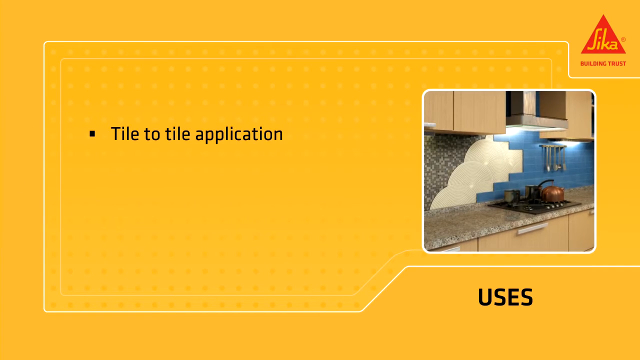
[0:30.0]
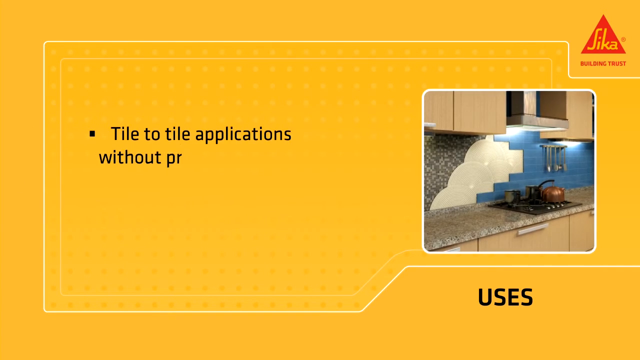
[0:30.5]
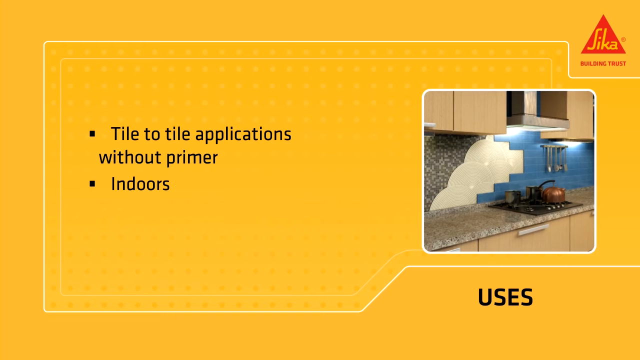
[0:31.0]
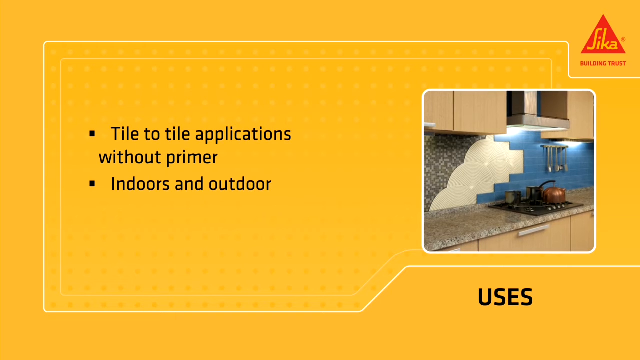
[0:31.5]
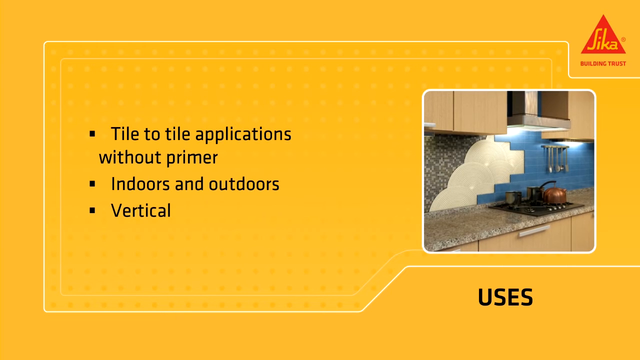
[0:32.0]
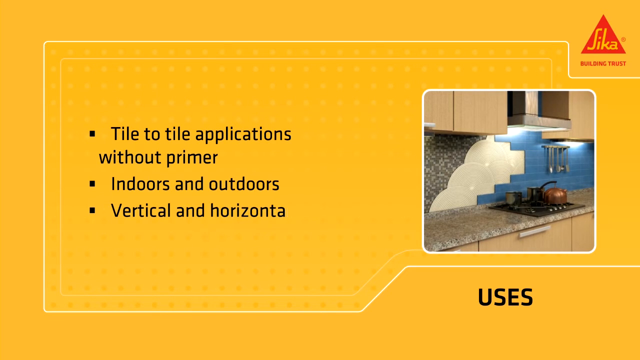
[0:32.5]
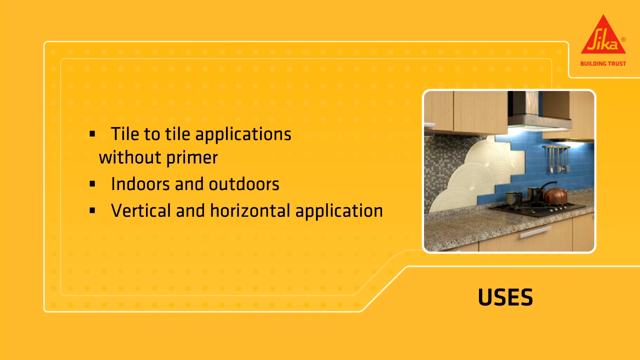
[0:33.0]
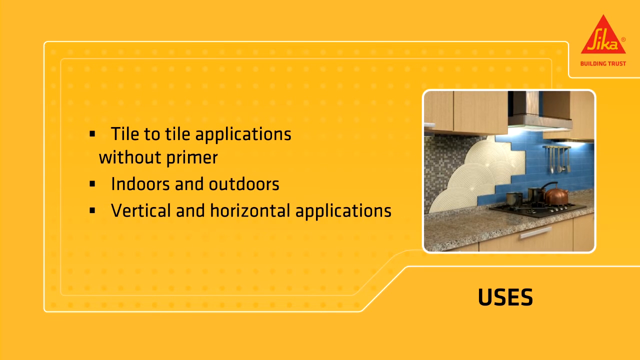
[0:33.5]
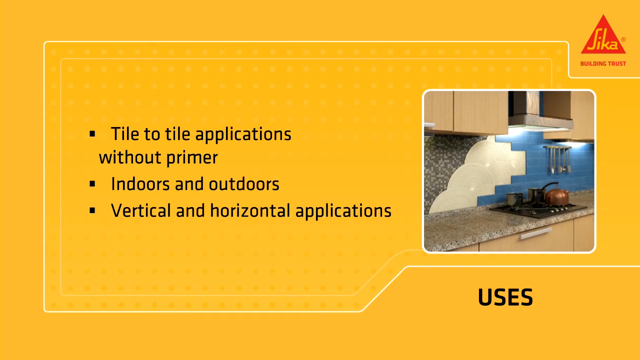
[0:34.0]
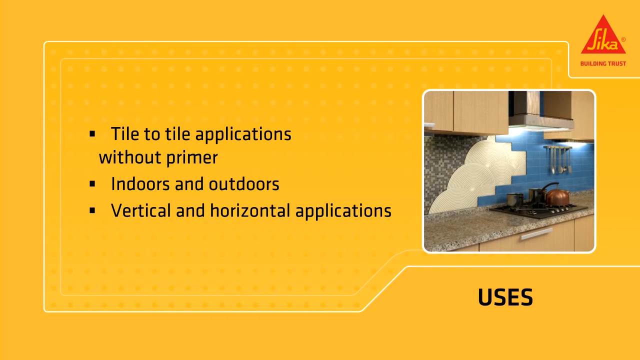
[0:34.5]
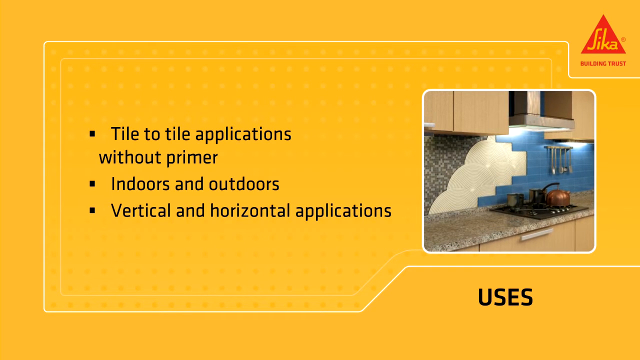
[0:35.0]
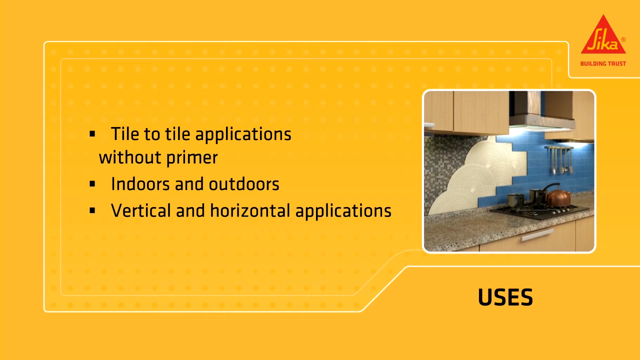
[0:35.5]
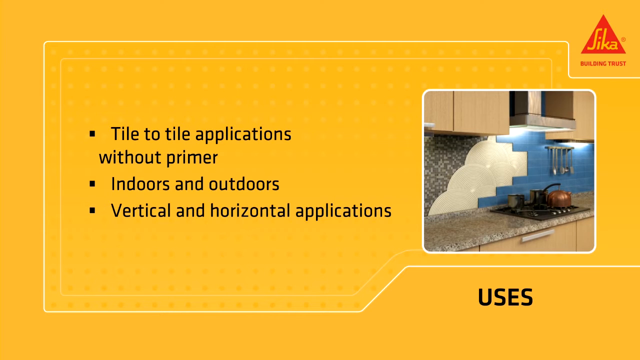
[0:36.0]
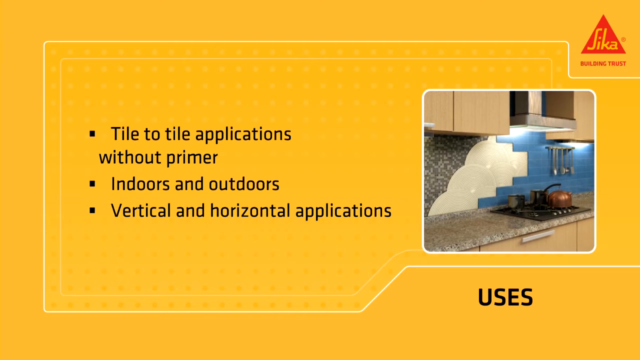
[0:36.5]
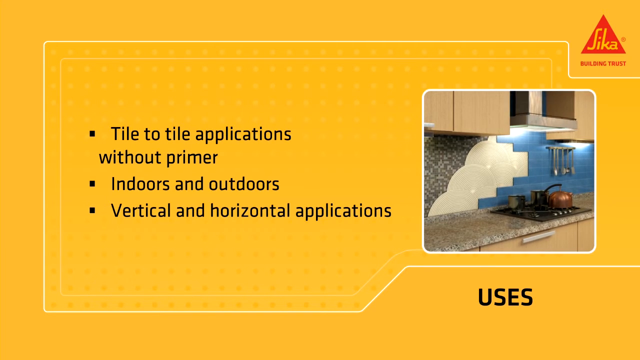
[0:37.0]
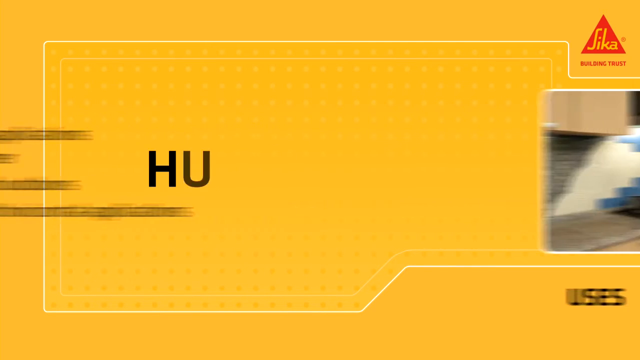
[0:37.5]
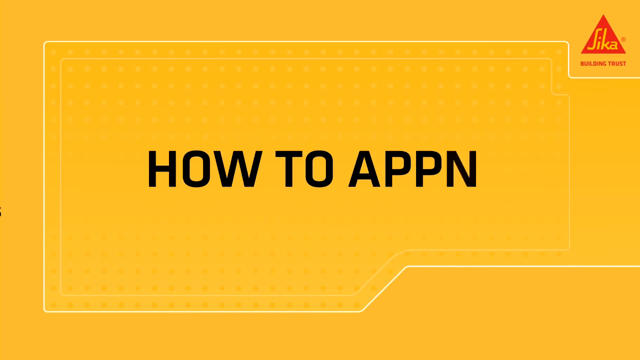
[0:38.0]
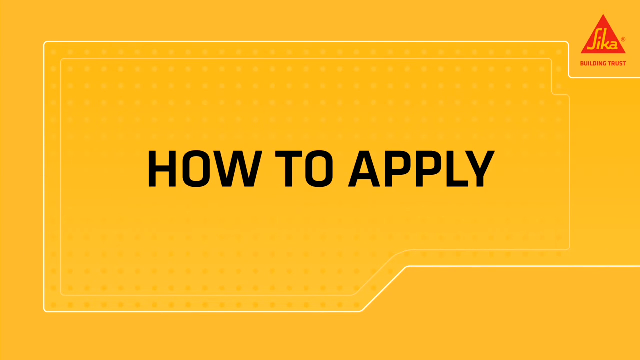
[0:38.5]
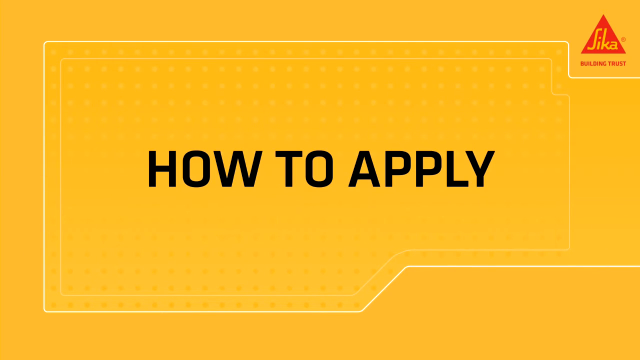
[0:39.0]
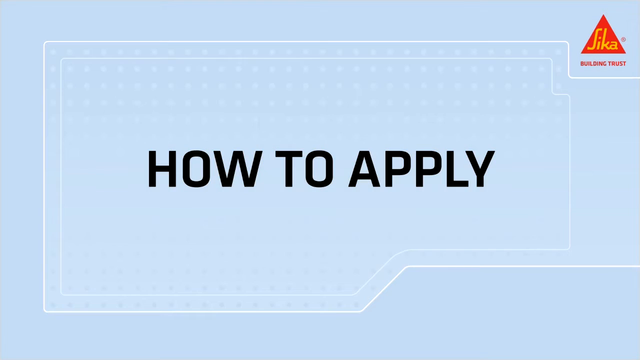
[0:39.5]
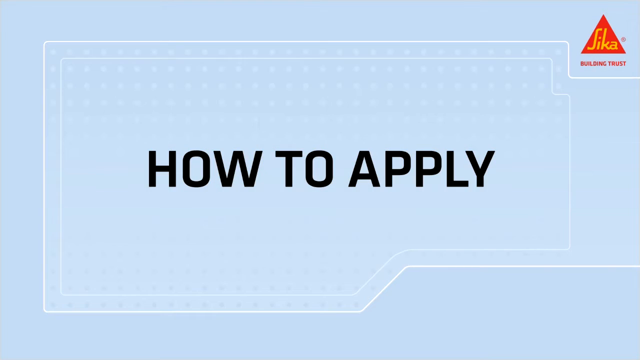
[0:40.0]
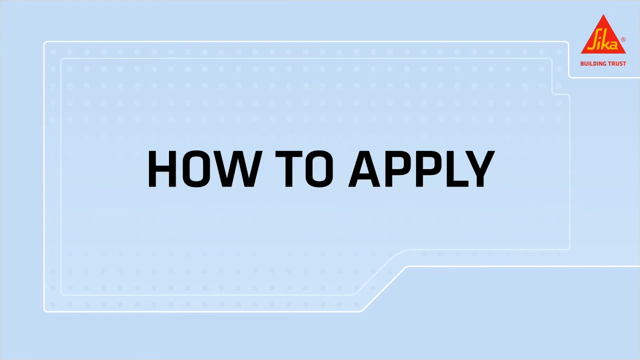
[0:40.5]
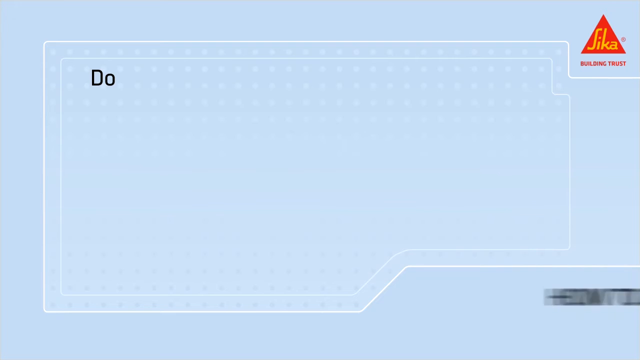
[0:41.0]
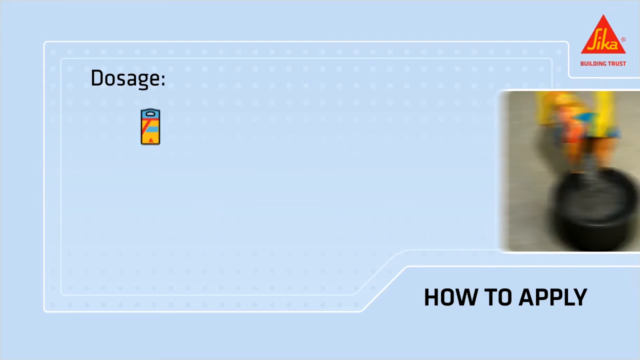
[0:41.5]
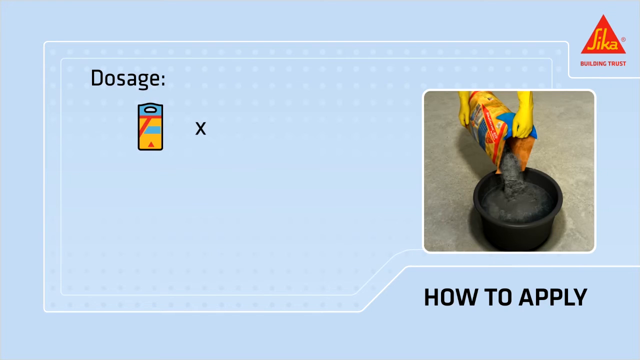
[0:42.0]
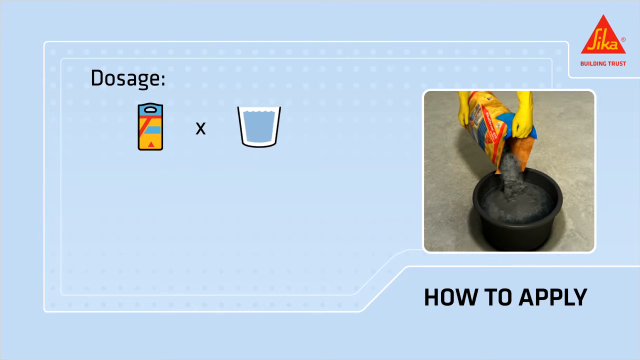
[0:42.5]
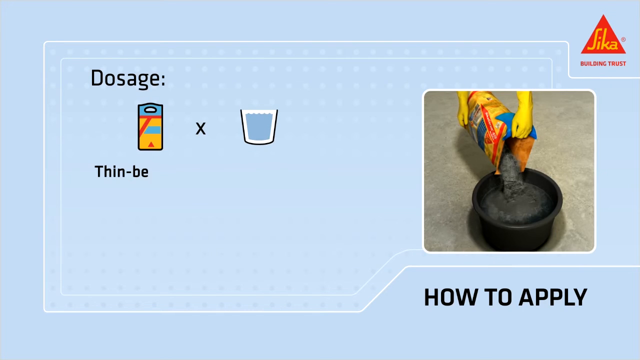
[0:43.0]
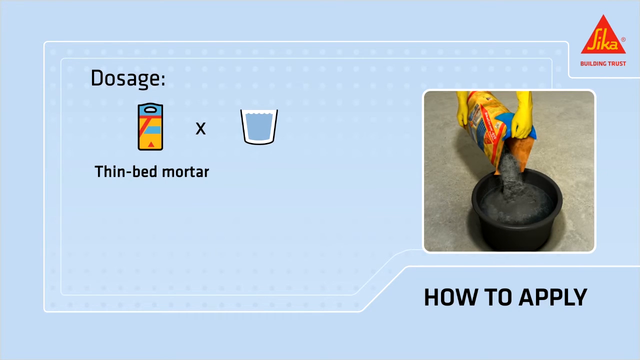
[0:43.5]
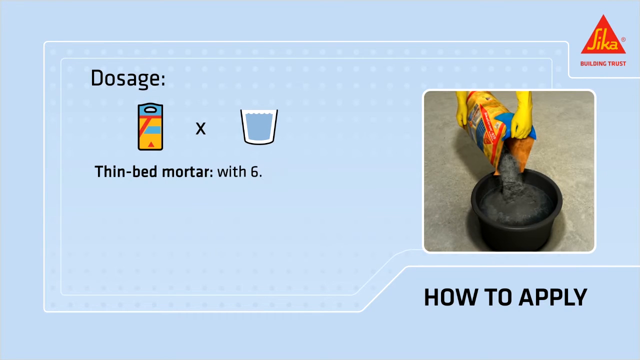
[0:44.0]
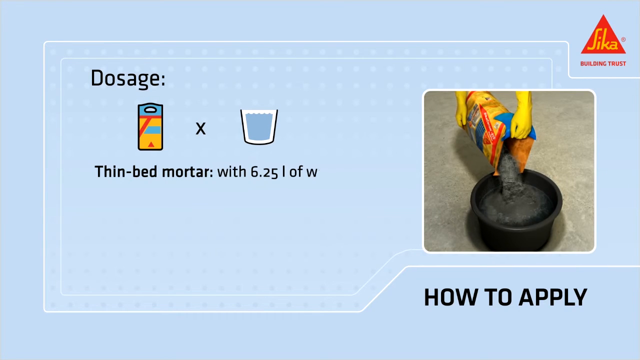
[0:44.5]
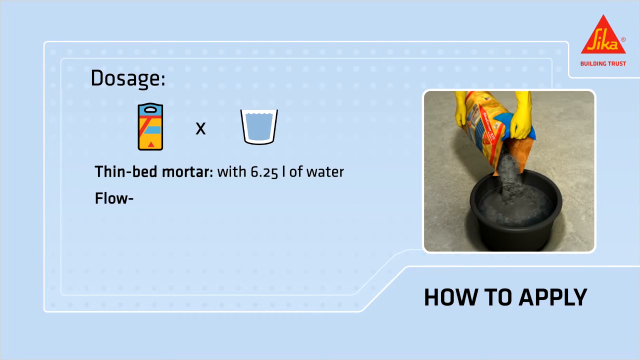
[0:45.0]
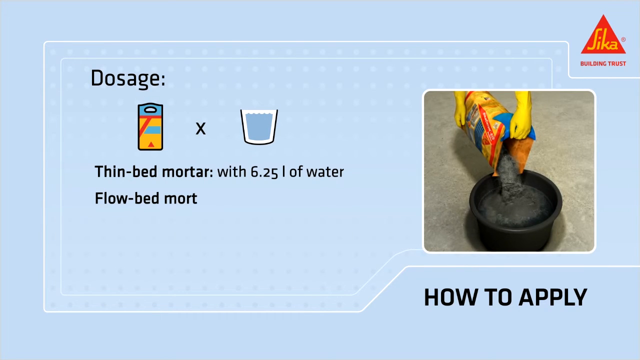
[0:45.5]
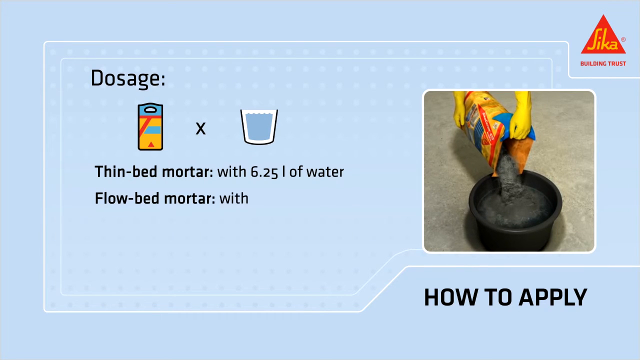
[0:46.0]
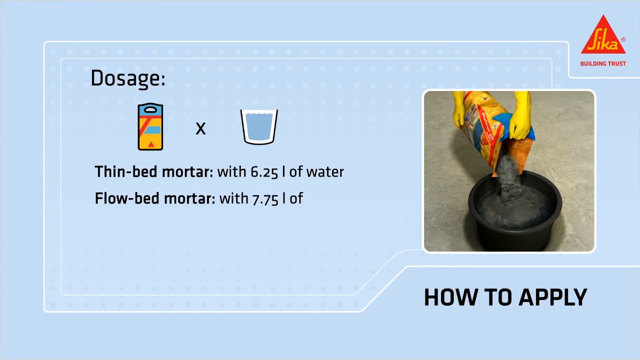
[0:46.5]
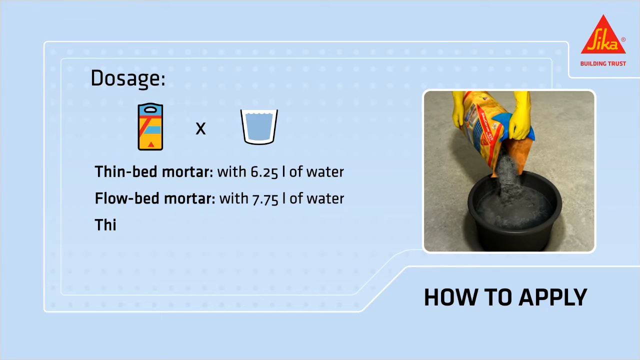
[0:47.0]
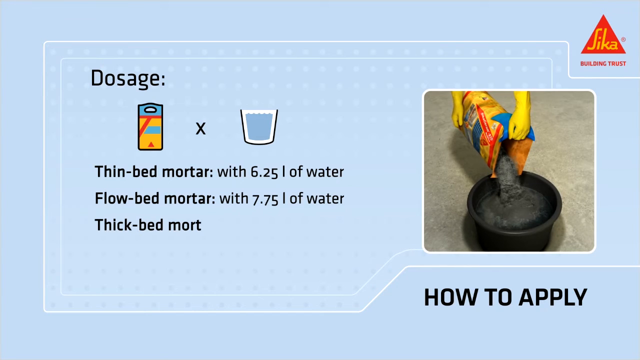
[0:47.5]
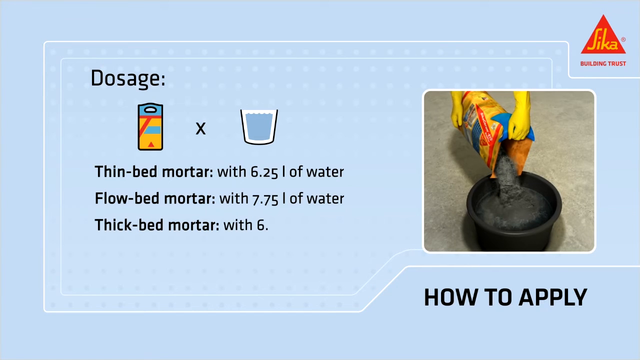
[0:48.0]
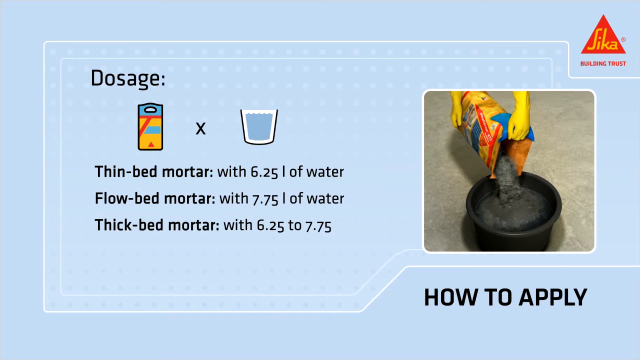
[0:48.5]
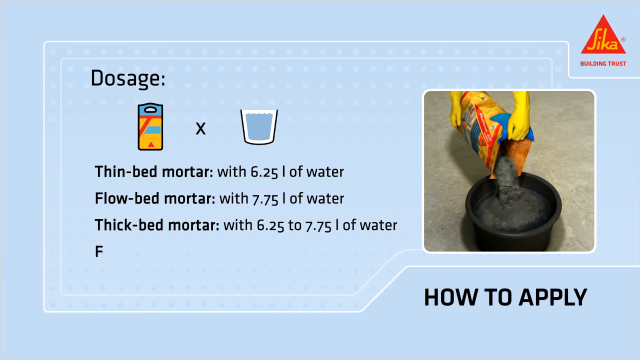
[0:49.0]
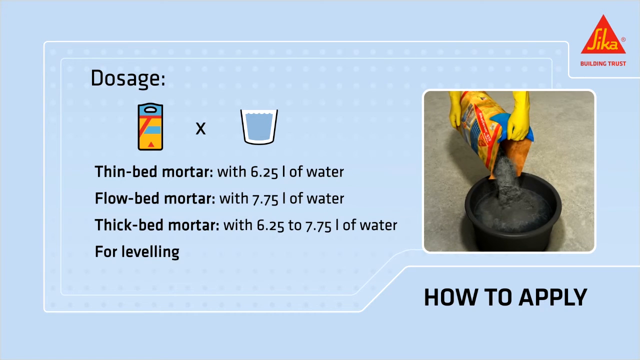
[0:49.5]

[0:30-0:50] On a red background, text appears. On the right is a kitchen example: a sink, a granite countertop, and a backsplash wall where someone has used the trowel to spread glue and is putting blue tiles on it; the glued section is yellowish beige. Text on the left reads "tile-to-tile applications without primer, indoors and outdoors," and below that "vertical and horizontal applications." This exits and "how to apply" appears. The color changes from yellow to blue, the black "how to apply" shoots forward and disappears, and information appears on the left with a photo on the right. In the photo, someone wearing yellow gloves grips a bag of material, the left hand in front holding the open end and the right hand gripping the back end, and pours a charcoal black material, apparently a powder though possibly wet compound, into a black bucket; below the bucket it says "how to apply." On the left it shows "dosage," with one bag times a container of water, and below that "thin bed mortar with 6.2 liters of water," "flow bed mortar with 7.5 liters of water," "thick bed mortar 6.25 to 6.75 liters of water," and "for leveling up to 30 millimeters."